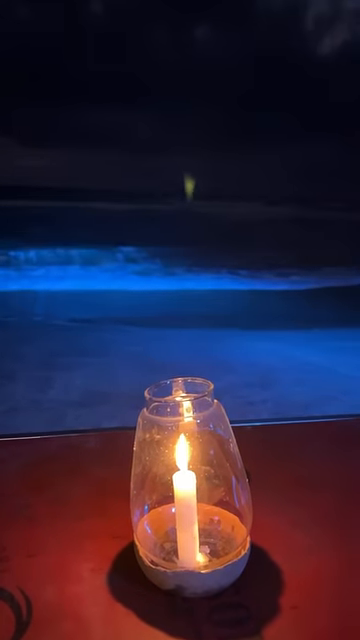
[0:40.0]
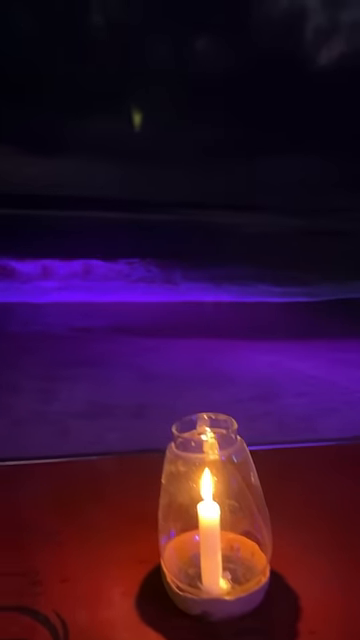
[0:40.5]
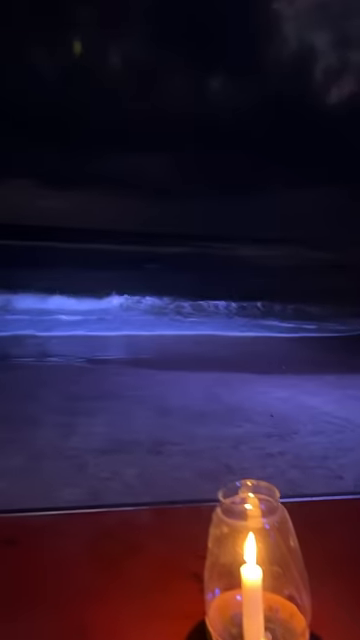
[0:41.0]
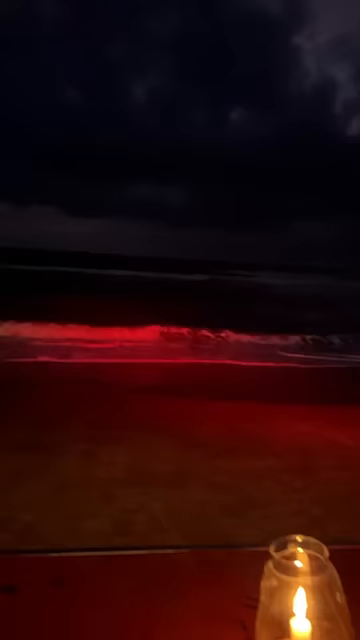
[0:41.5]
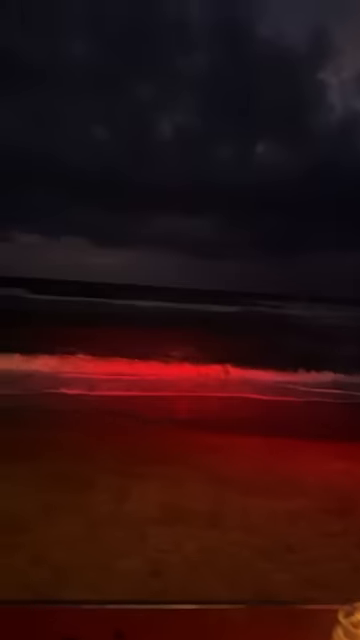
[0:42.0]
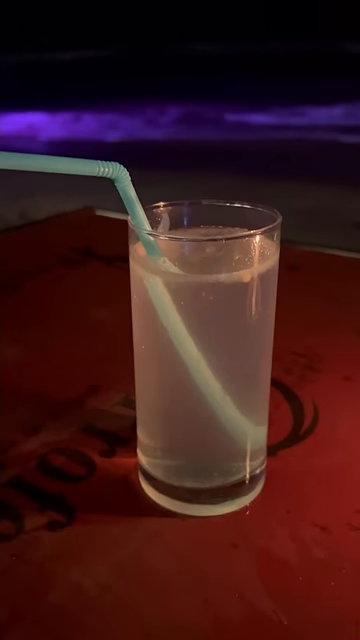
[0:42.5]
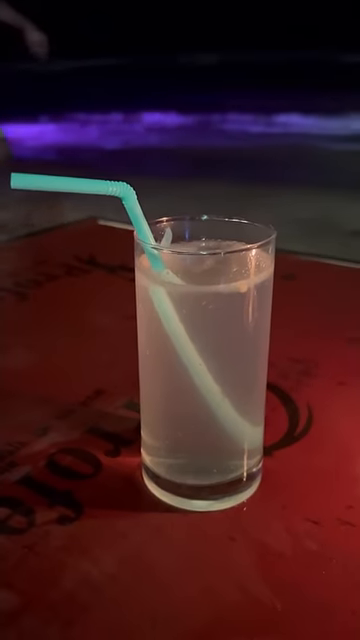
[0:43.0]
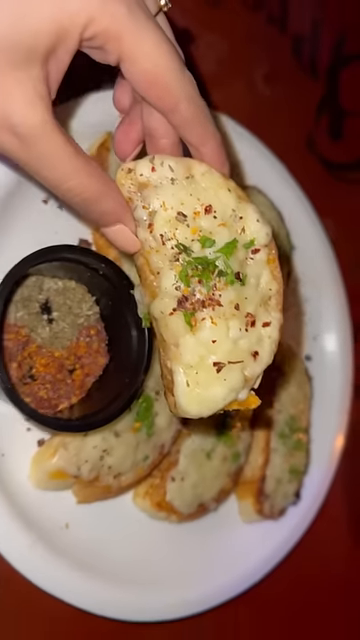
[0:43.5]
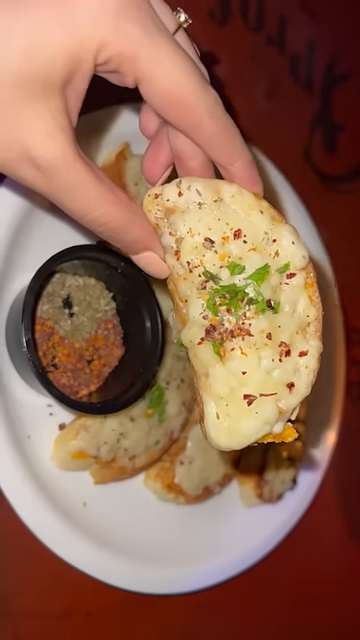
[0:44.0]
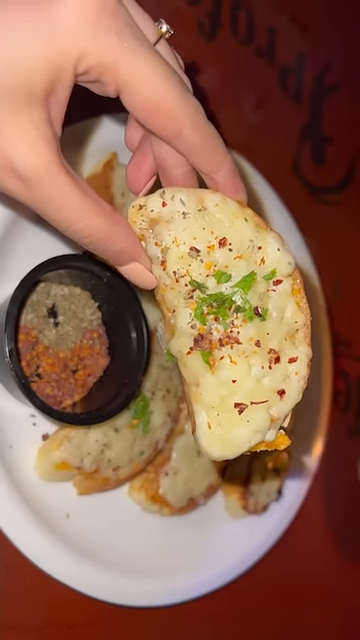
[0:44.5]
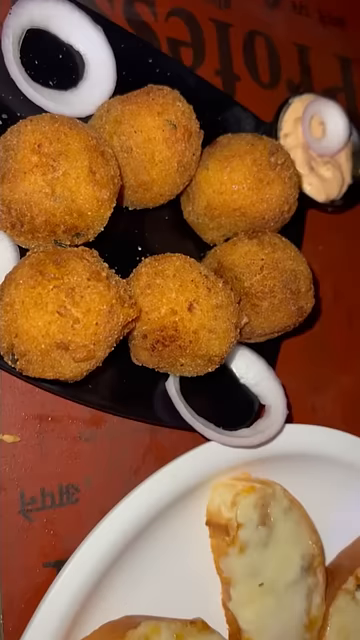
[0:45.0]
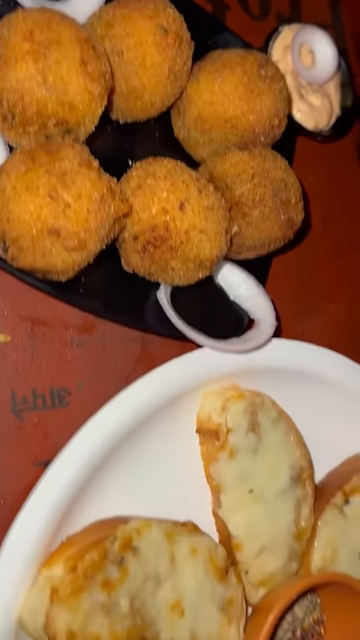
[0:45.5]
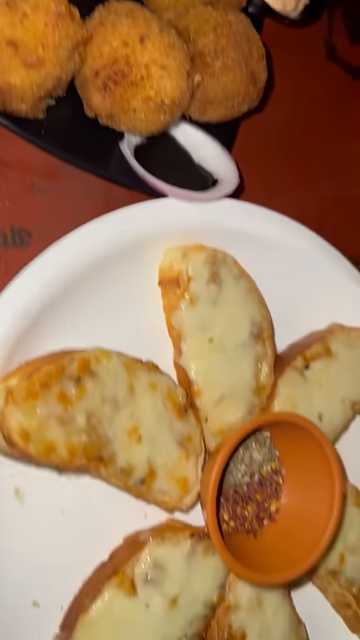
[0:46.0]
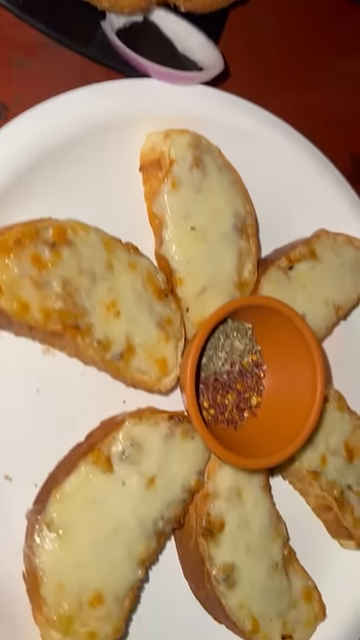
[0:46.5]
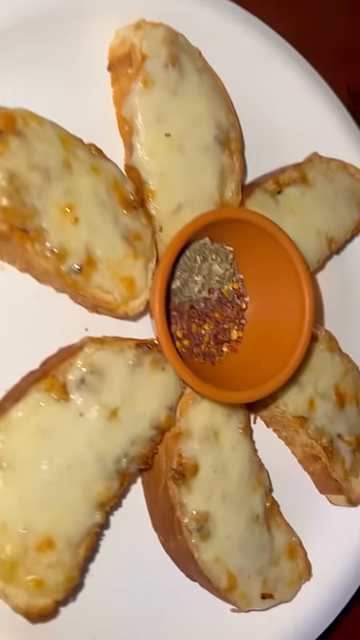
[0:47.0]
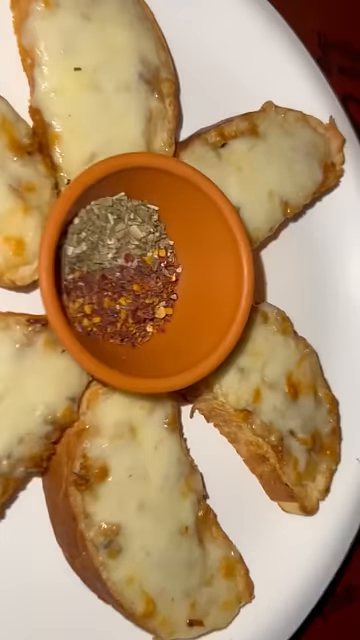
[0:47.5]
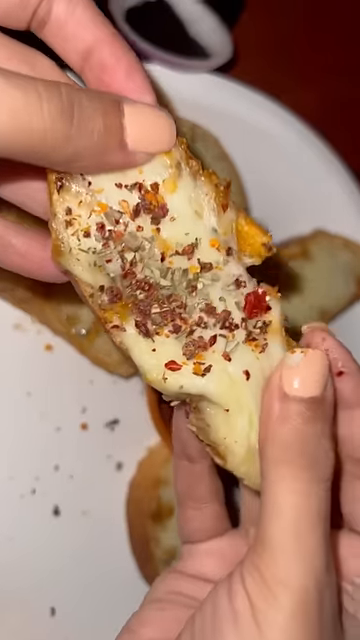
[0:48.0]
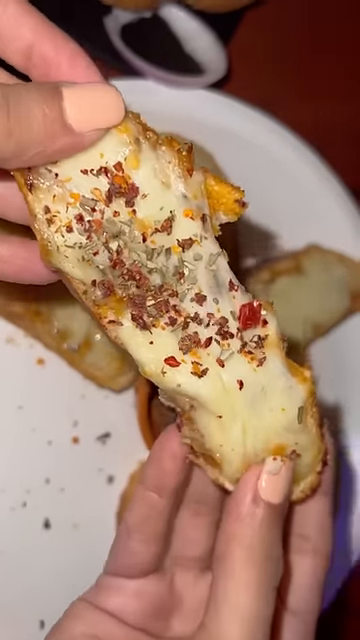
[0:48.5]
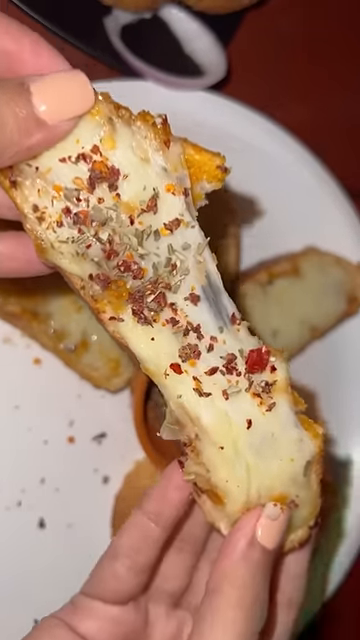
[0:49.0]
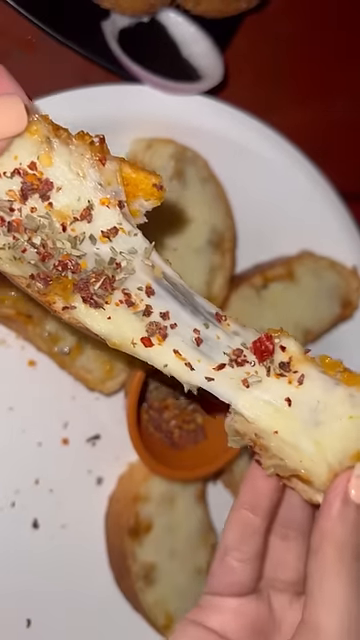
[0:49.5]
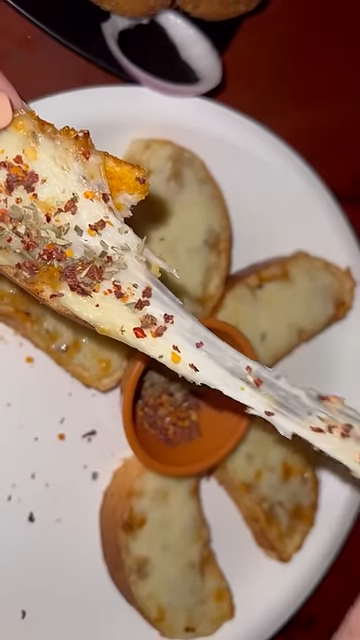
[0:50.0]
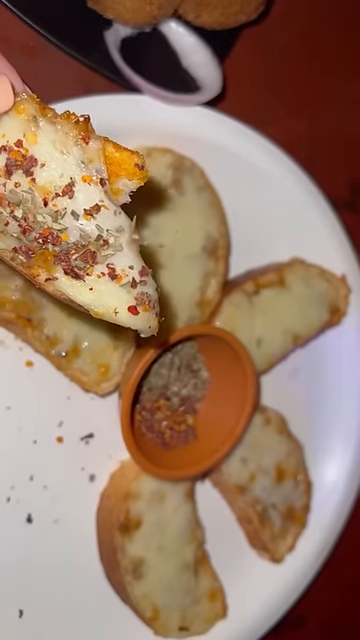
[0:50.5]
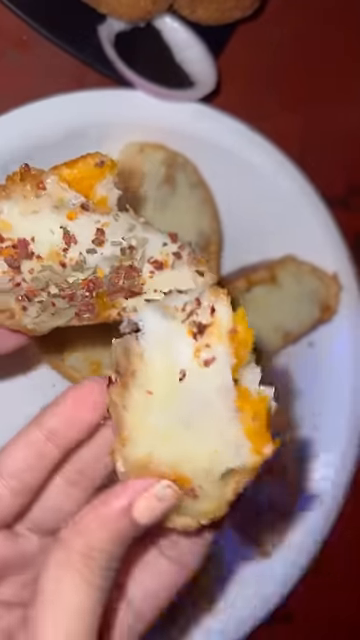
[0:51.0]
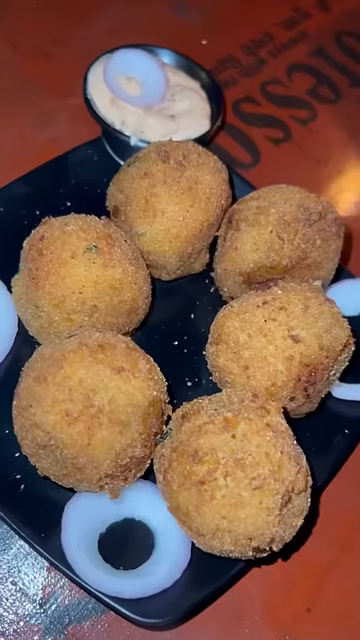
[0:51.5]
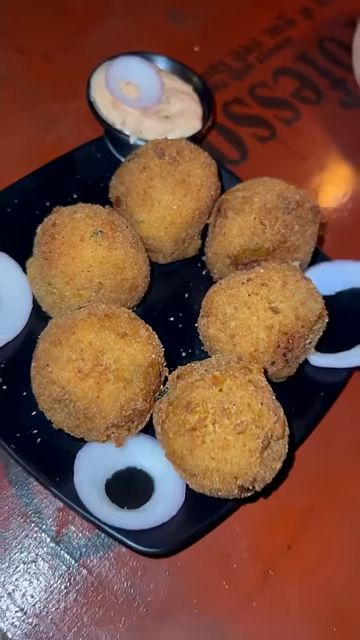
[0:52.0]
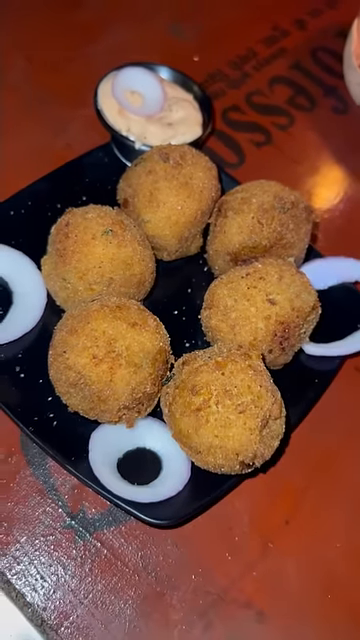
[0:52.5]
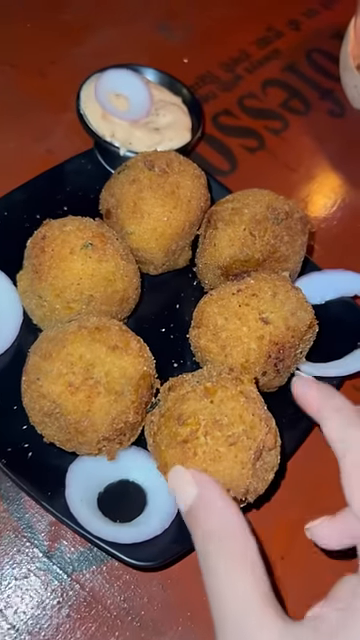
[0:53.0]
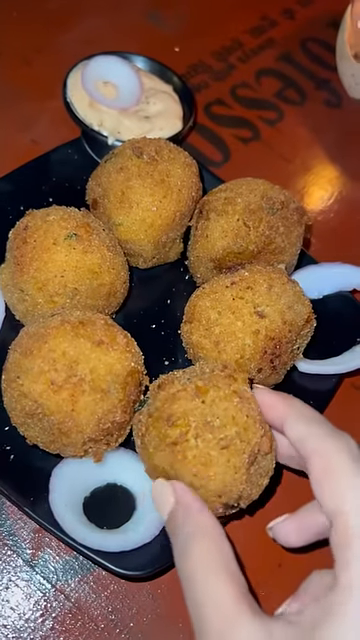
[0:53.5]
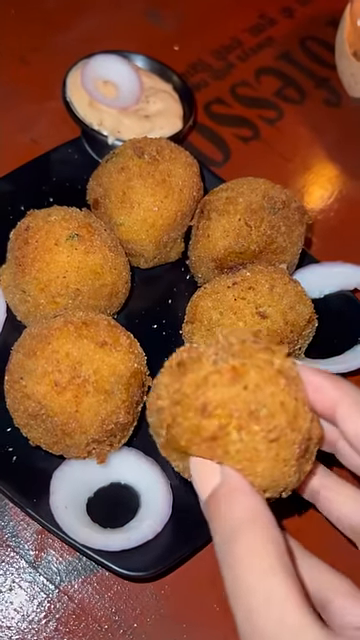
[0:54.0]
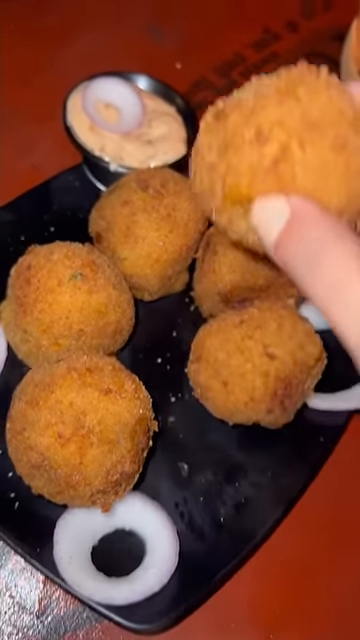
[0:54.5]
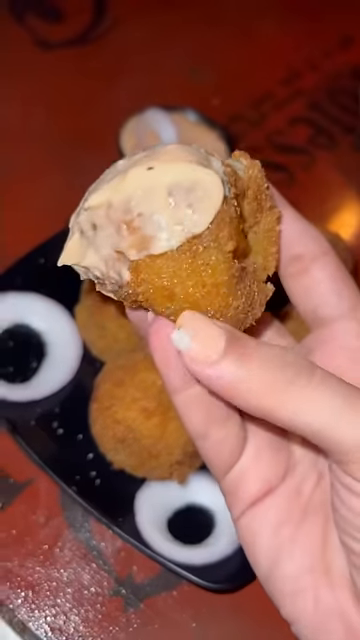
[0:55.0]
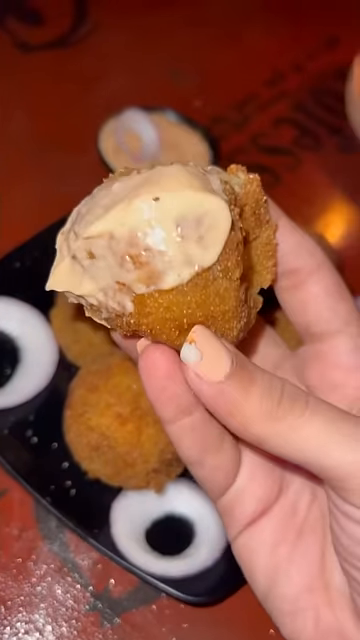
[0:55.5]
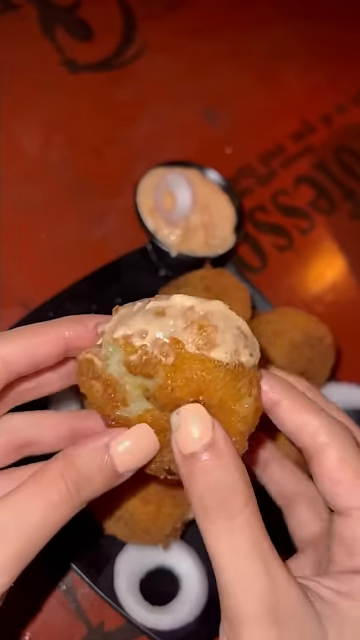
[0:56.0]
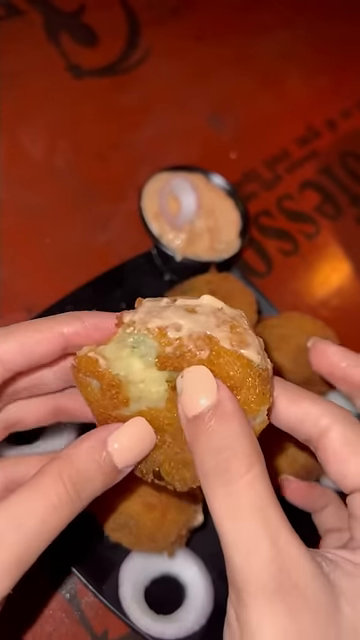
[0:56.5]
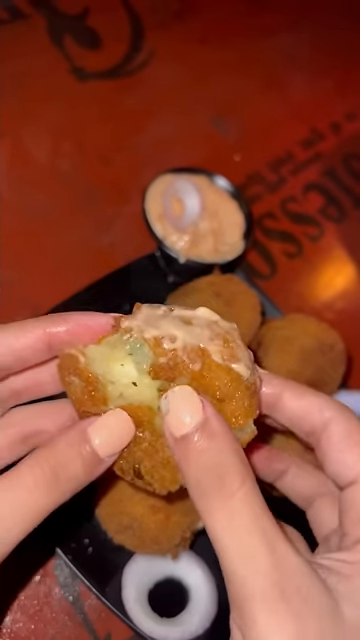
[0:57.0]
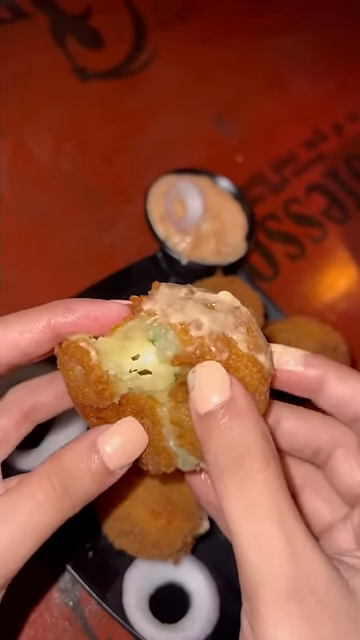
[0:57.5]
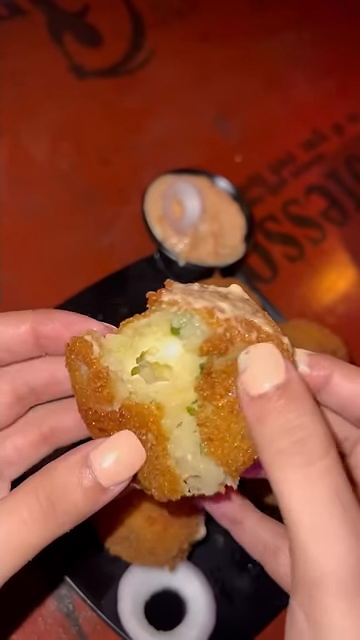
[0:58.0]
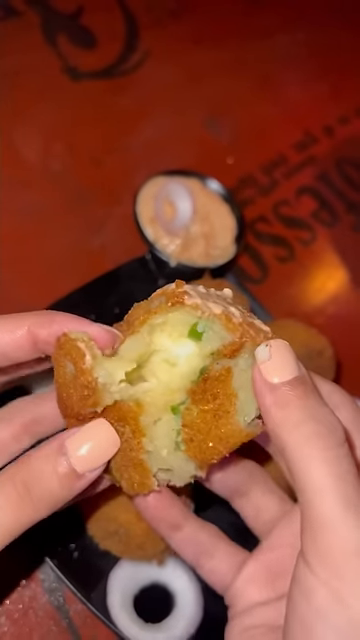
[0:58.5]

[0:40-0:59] From a balcony with a candle on the table, the view looks out on the beach at nighttime, showing waves crashing with some color-changing lights. A short cut shows a drink on a table with a straw in it, which appears to be a glass of water or a similarly colored beverage. Next, a plate on a table holds some type of cheesy bread or stuffed bread, and a hand holds it as if about to eat it. The camera pans over to other items that look similar to bread balls or hush puppies, which are broken and pulled apart by hand to show how stringy the cheese is.